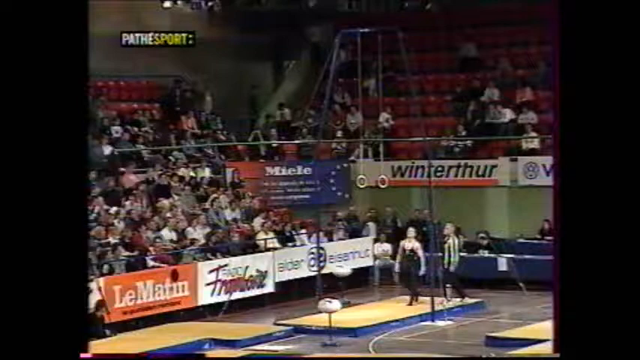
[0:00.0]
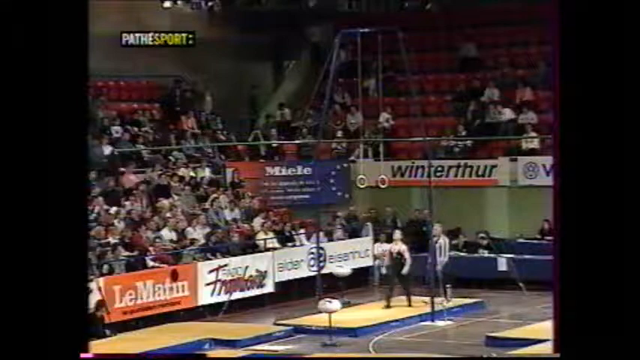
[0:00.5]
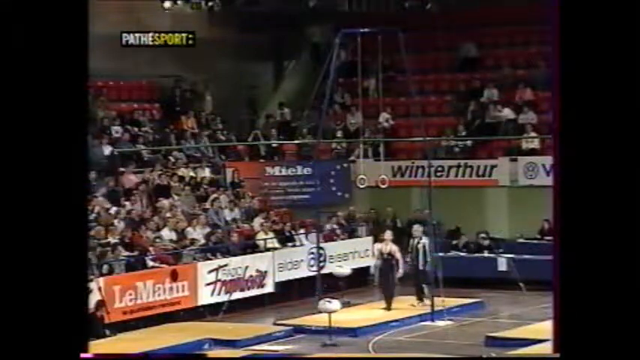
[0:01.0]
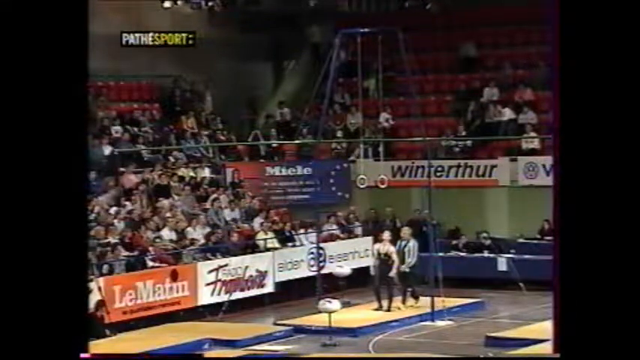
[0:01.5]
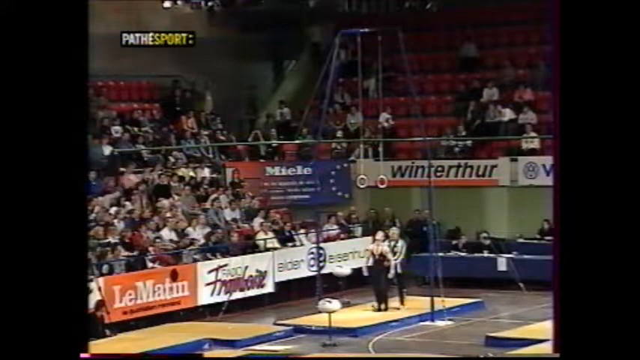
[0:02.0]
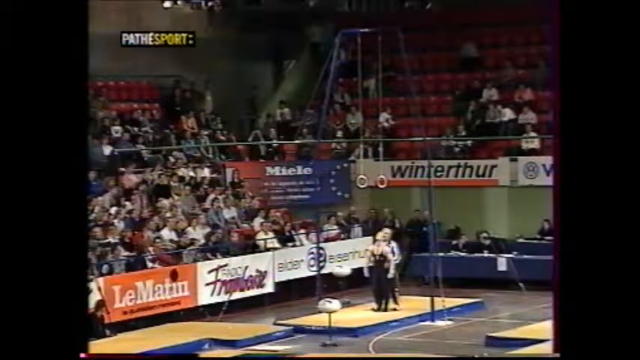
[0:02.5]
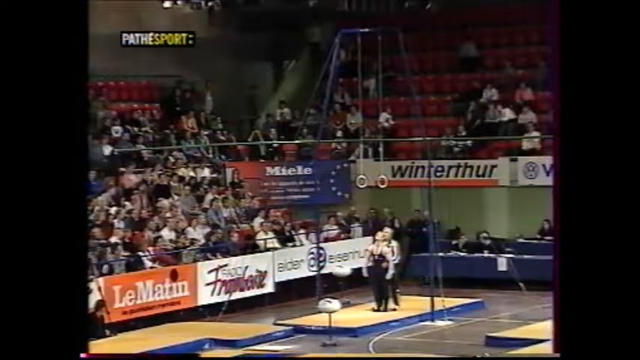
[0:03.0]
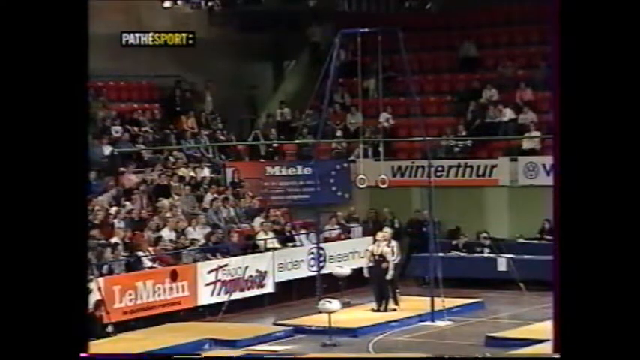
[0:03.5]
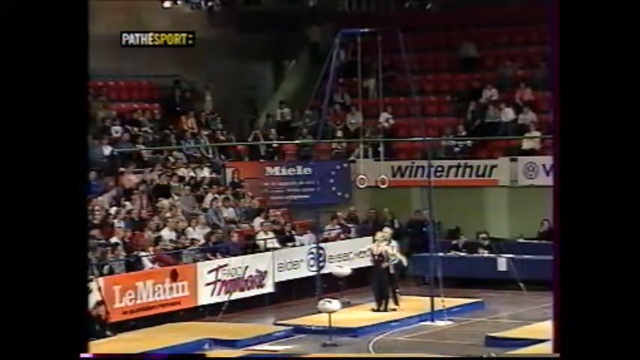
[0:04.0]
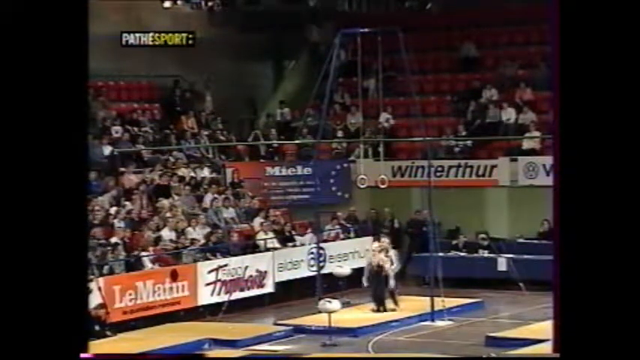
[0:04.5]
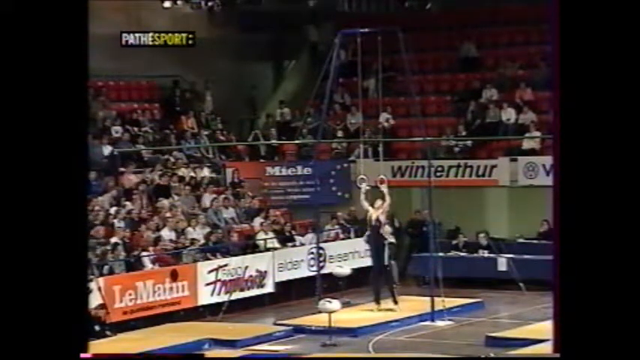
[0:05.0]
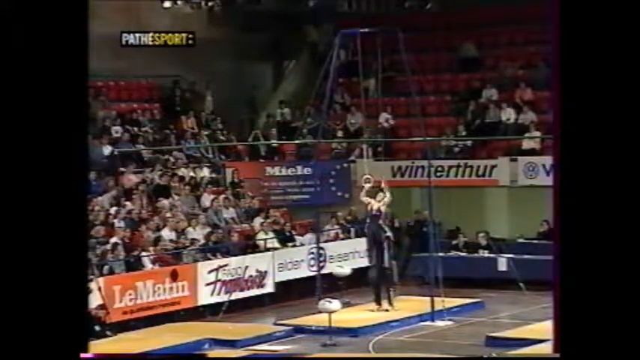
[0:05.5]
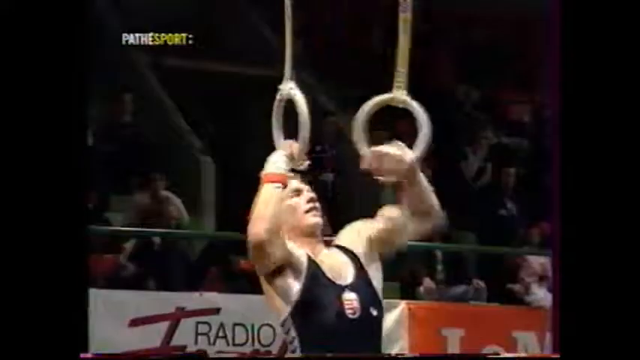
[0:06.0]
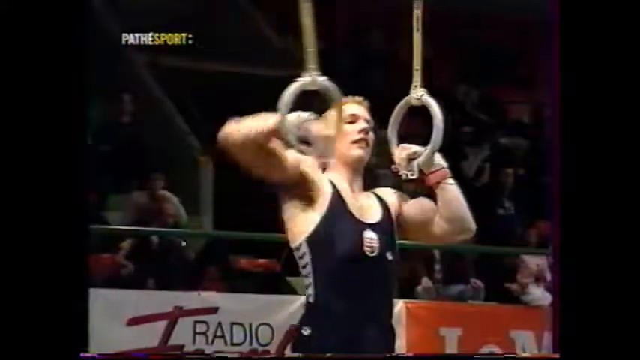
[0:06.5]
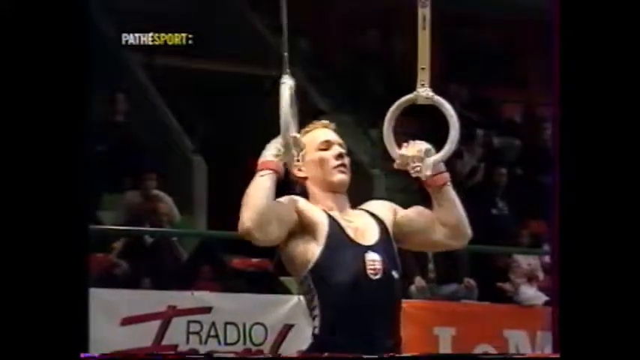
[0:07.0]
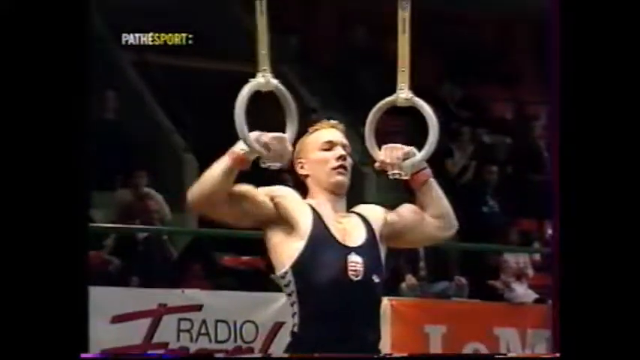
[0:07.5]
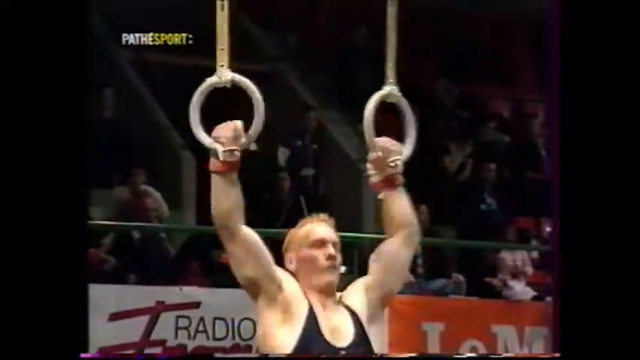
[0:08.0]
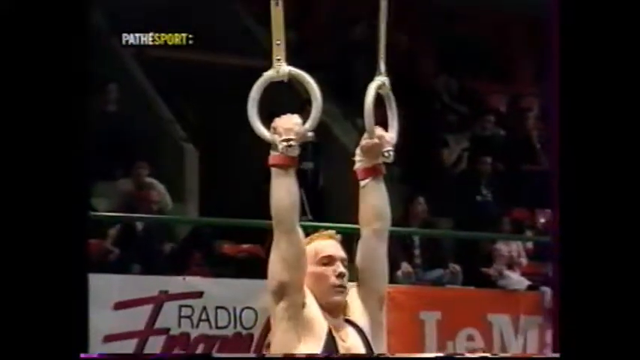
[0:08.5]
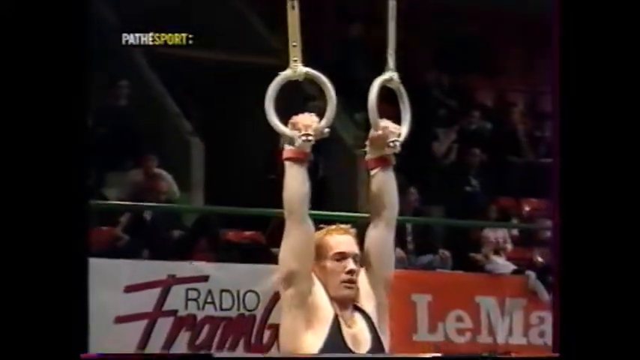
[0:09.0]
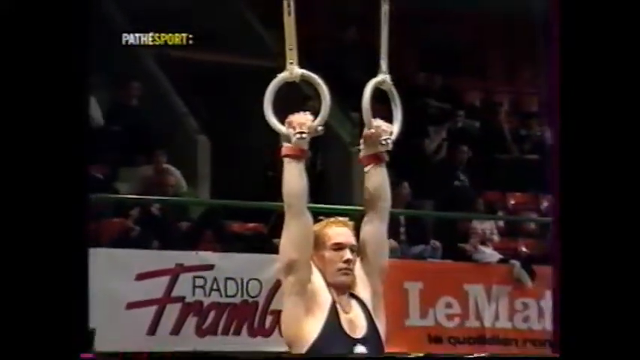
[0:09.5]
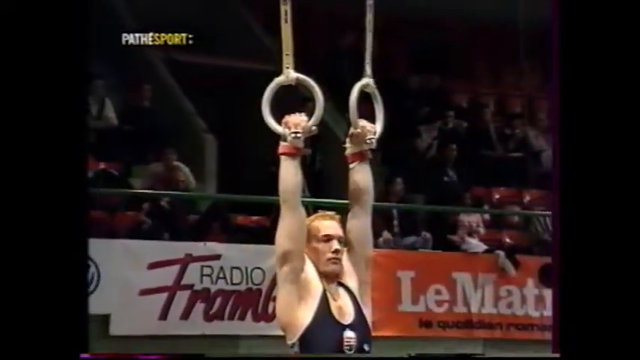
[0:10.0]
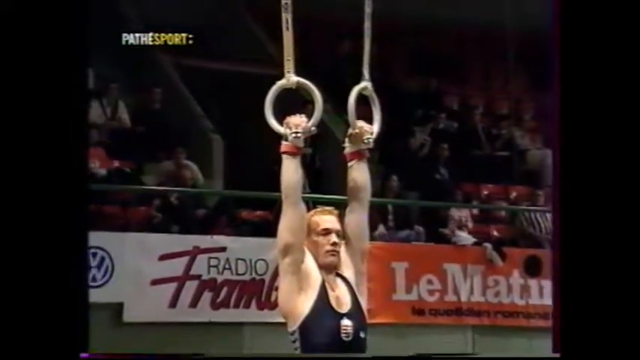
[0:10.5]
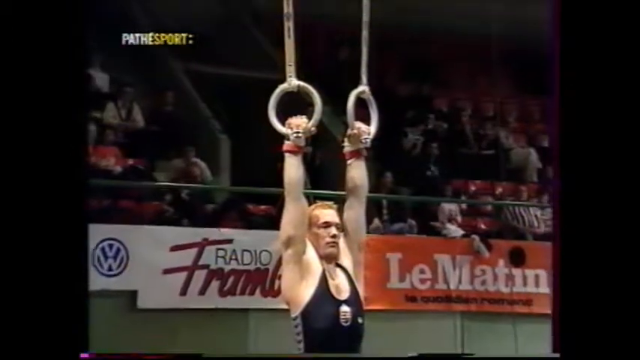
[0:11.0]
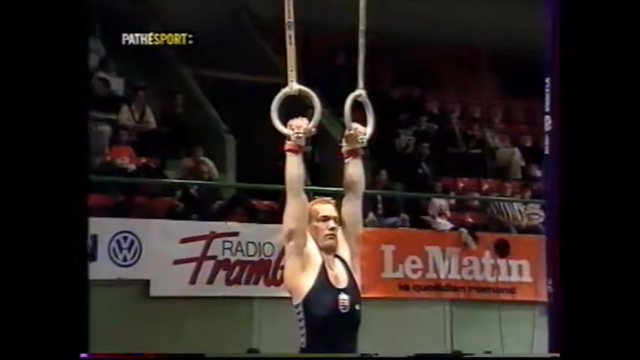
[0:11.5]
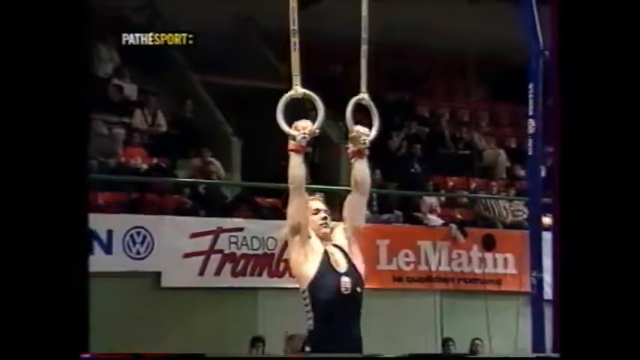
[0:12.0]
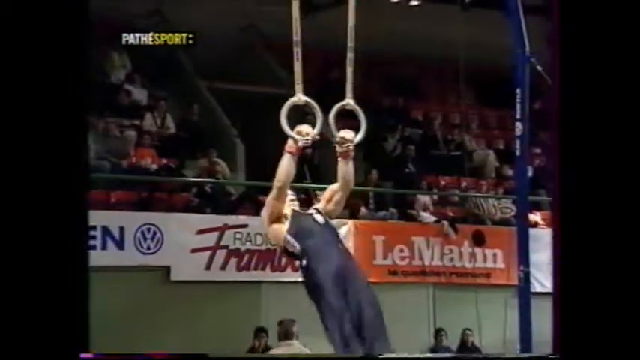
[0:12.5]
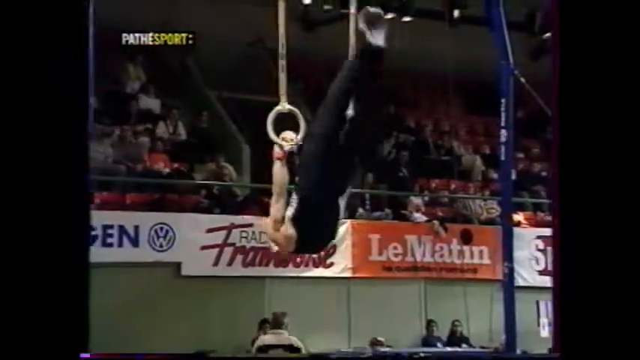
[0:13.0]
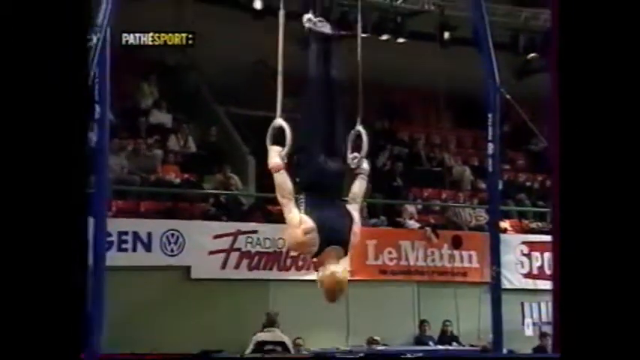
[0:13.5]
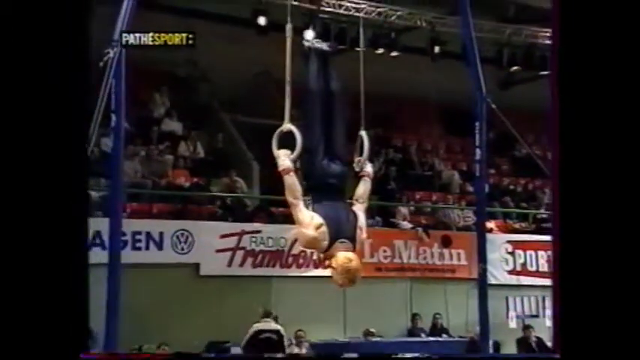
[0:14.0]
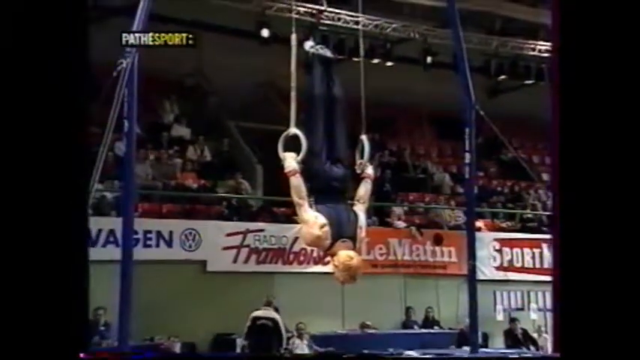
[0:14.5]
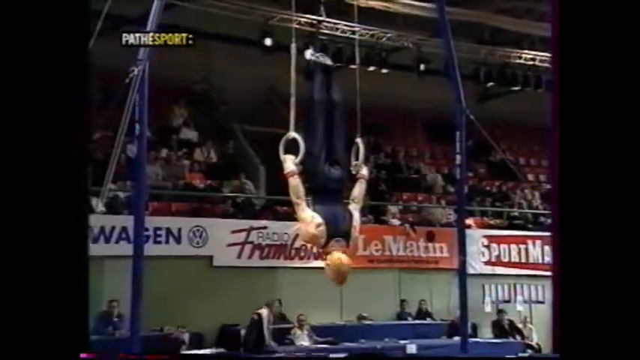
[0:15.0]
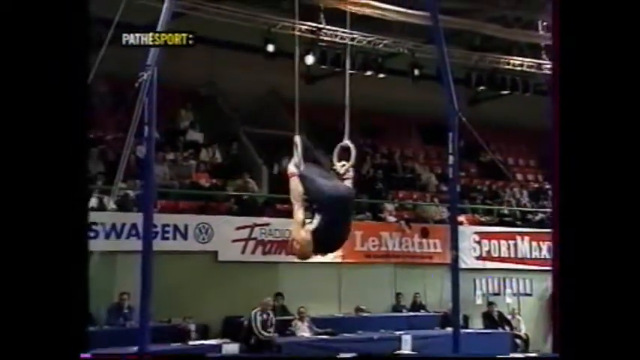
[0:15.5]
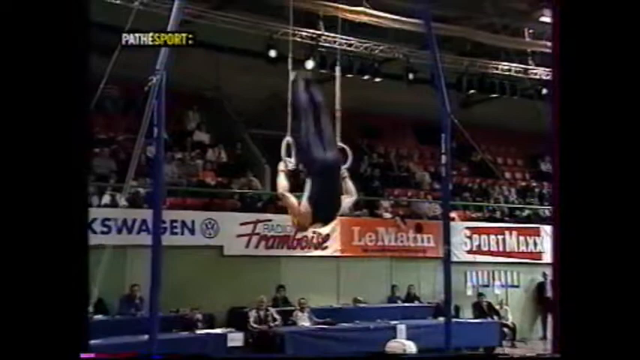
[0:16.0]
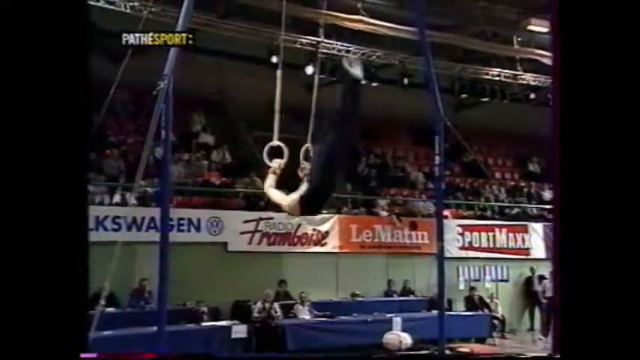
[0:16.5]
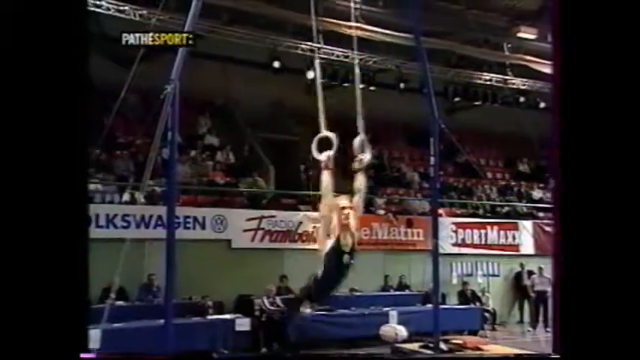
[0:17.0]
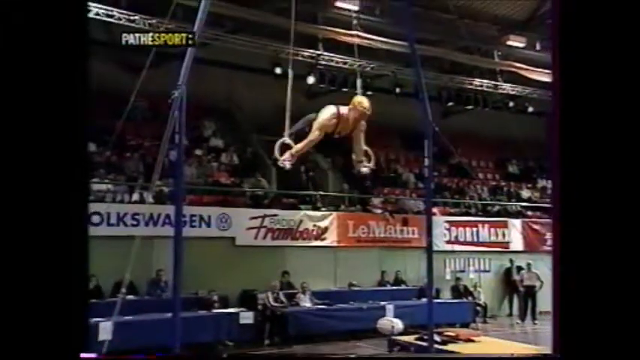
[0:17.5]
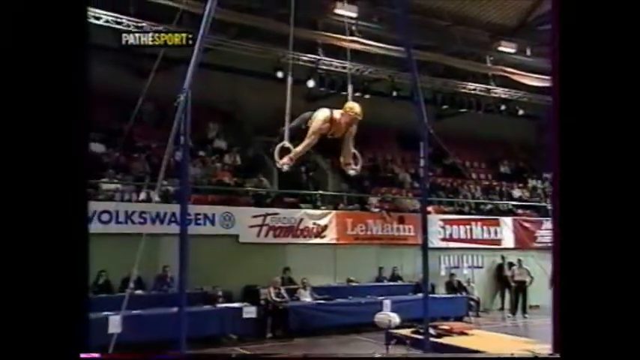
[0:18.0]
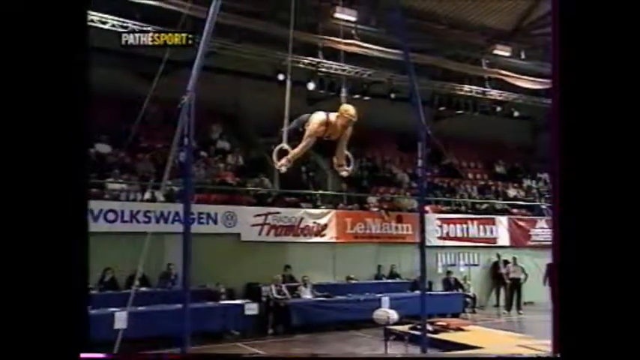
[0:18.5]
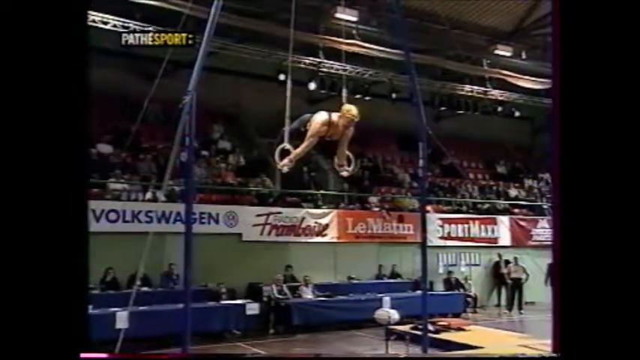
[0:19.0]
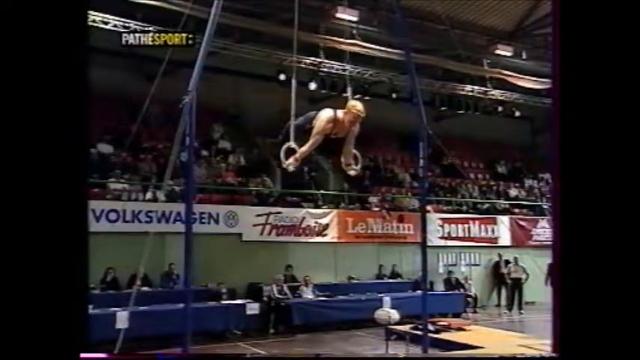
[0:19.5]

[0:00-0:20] A gymnasium hosts what looks like a competition, with people watching and some judges present. Advertisements line the walls: one reads "Le Matin" in white writing on an orange background; another reads "Radio Framboise", with "Framboise" in red on white; one shows "Miel" in red and blue with the European stars; and one reads "Winterthur", on a white background underlined in orange, along with a Volkswagen sign. In the corner is "PATHE Sport", with "PATHE" in white and "Sport" in yellow on a black background. The arena is about three quarters full, mostly with white Caucasian people sitting on red seats. A very muscular gymnast with blondish, reddish hair walks up to under the rings and looks up at them. An elderly gentleman, maybe a coach, is behind him and lifts him up. The gymnast, wearing a blue uniform, grabs onto the rings, secures himself, and pulls himself up so that his head faces down and his feet are up. The view switches to a different angle that shows him more clearly. His feet go down and back around to the front, then he pulls himself to a 90-degree angle, looking down. The judges sit at tables behind him, watching, with a blue tablecloth.